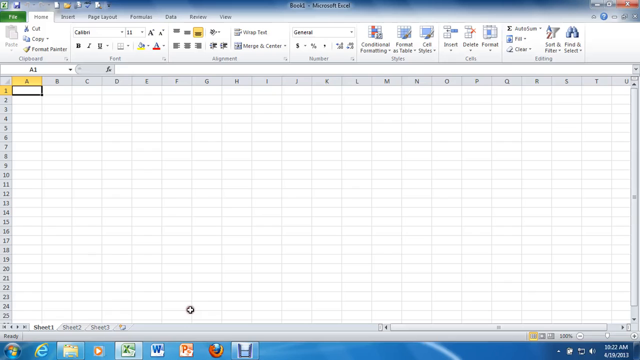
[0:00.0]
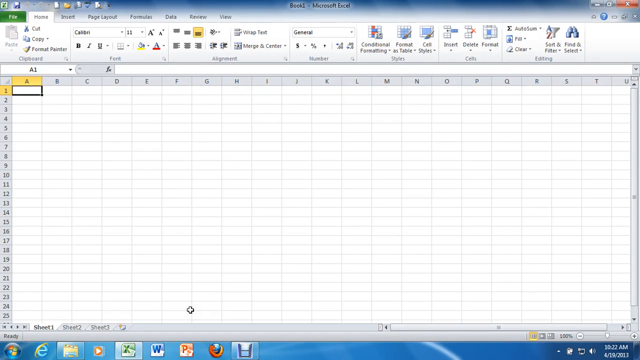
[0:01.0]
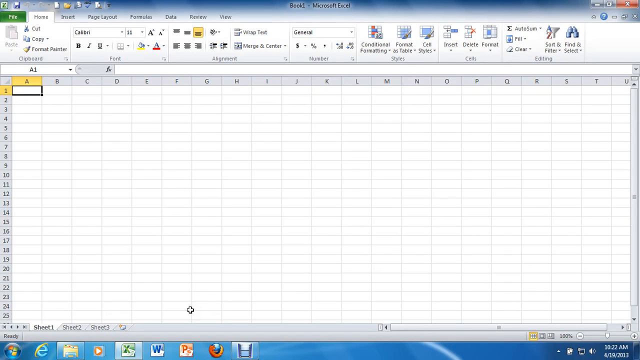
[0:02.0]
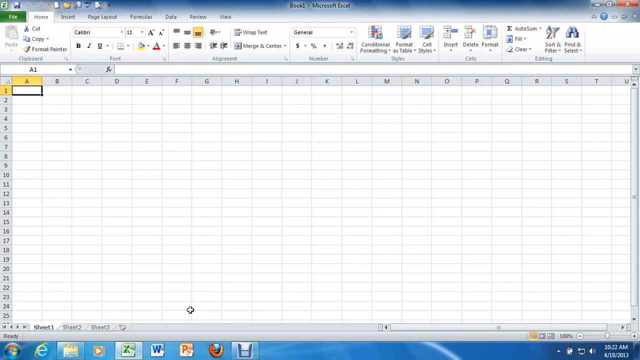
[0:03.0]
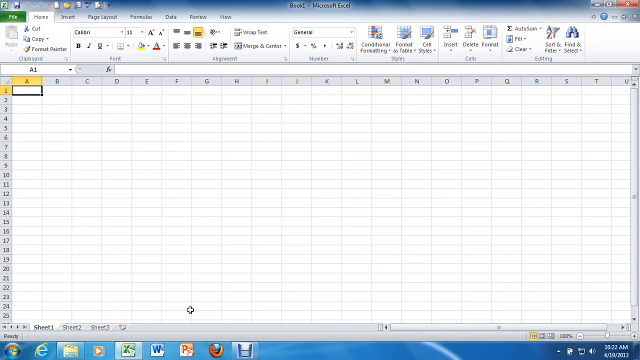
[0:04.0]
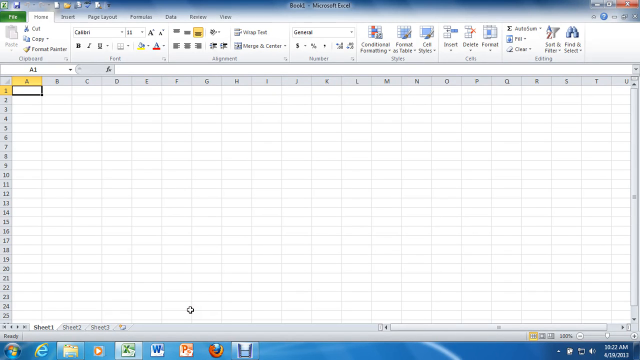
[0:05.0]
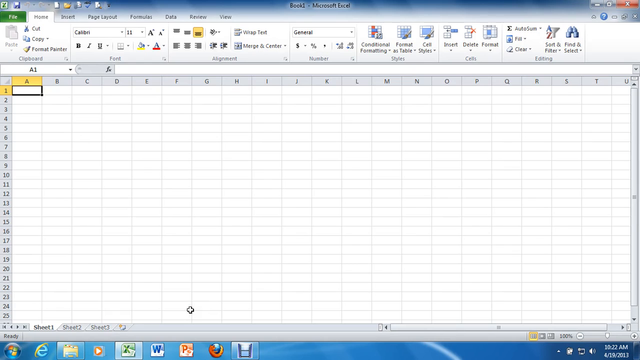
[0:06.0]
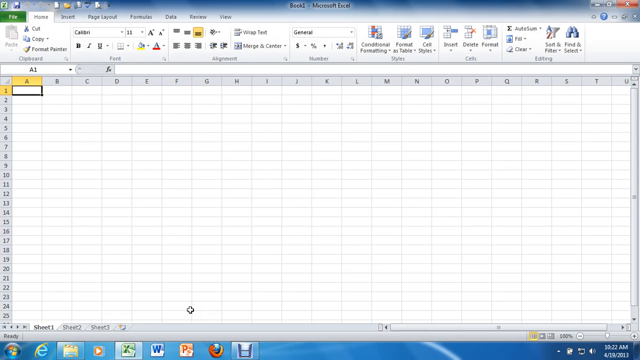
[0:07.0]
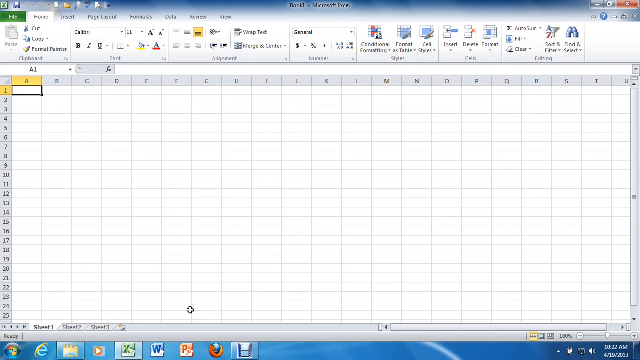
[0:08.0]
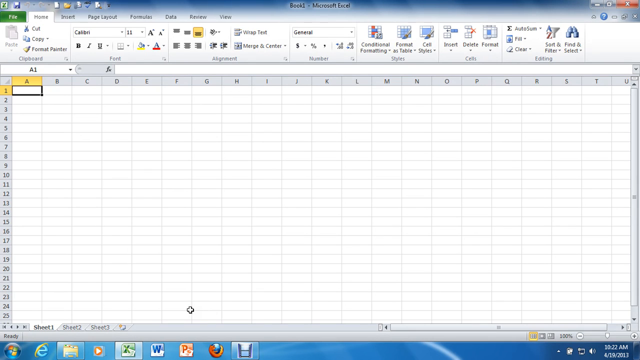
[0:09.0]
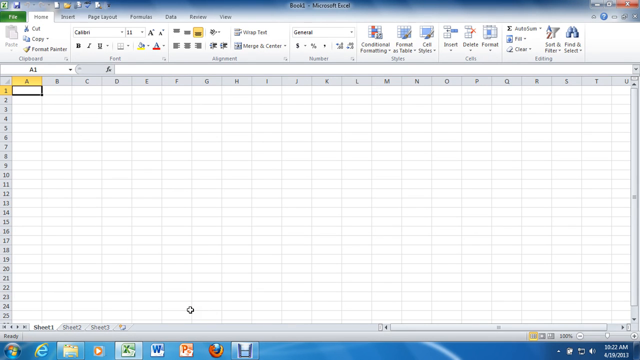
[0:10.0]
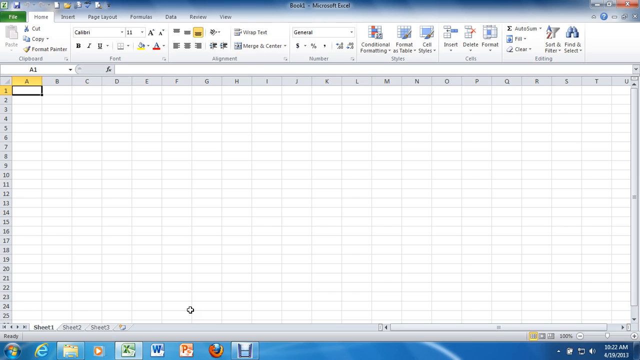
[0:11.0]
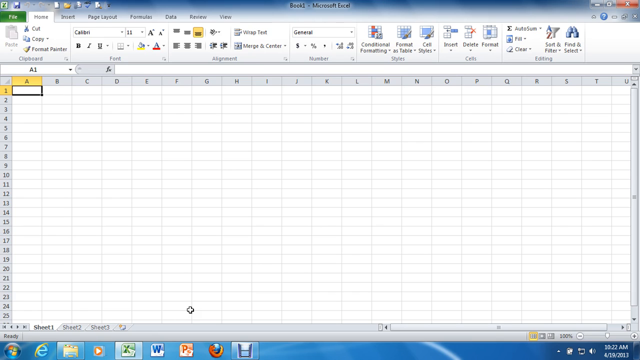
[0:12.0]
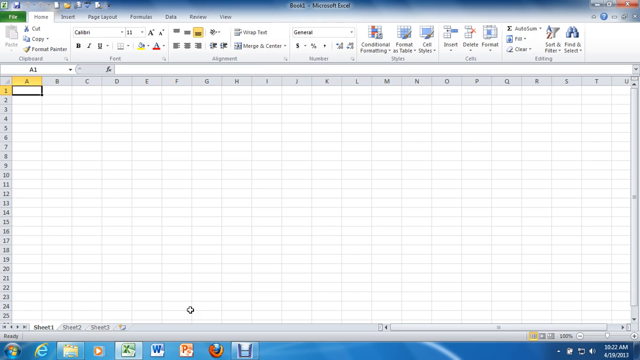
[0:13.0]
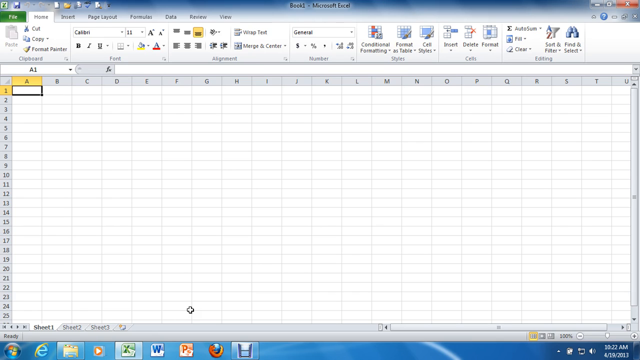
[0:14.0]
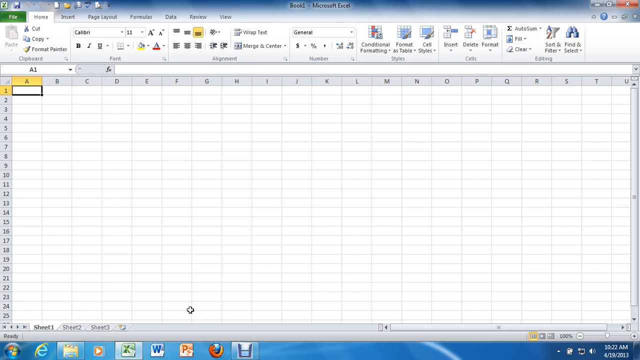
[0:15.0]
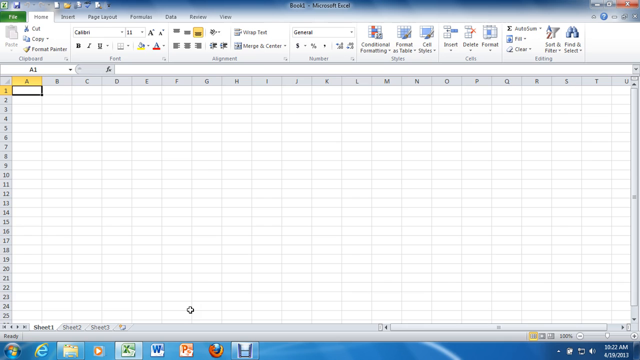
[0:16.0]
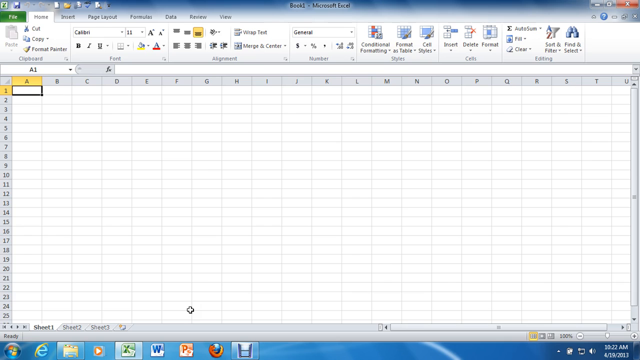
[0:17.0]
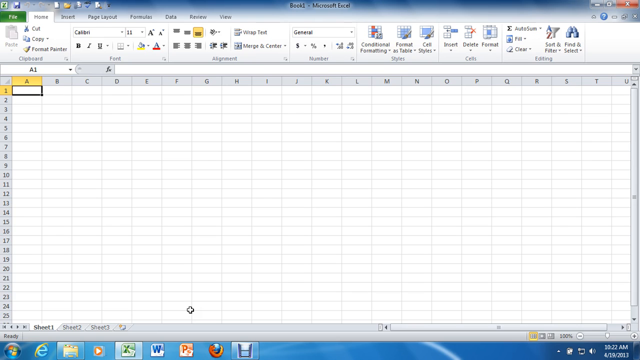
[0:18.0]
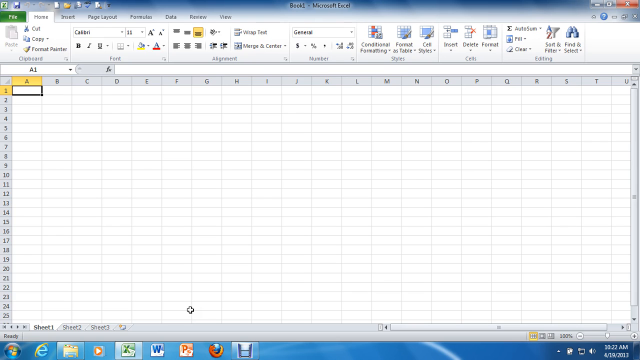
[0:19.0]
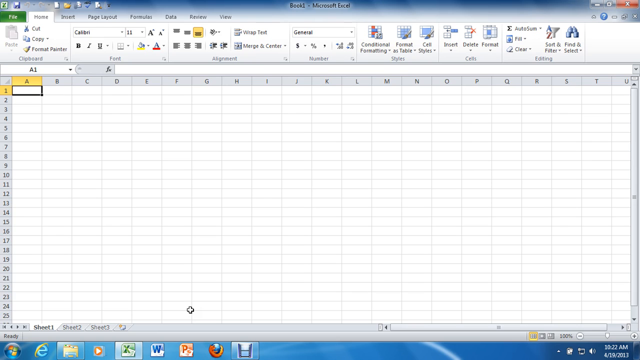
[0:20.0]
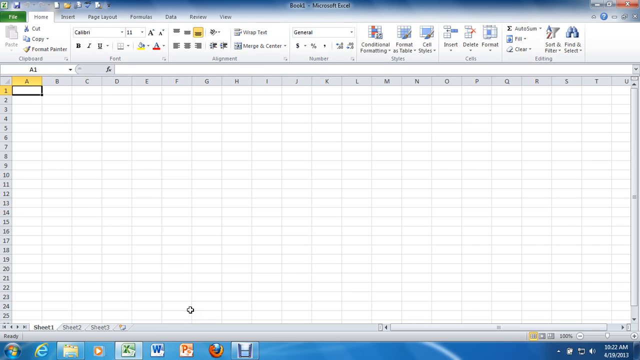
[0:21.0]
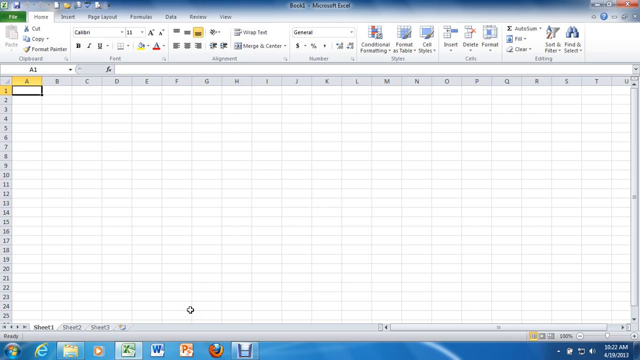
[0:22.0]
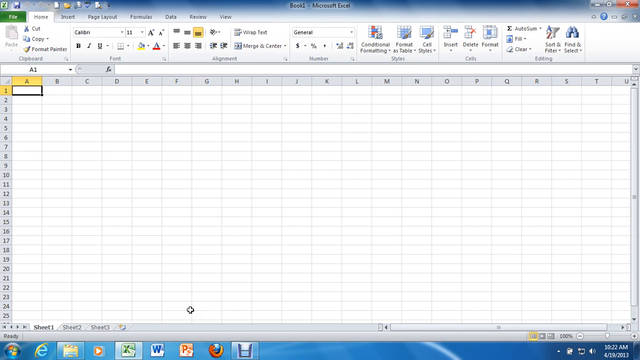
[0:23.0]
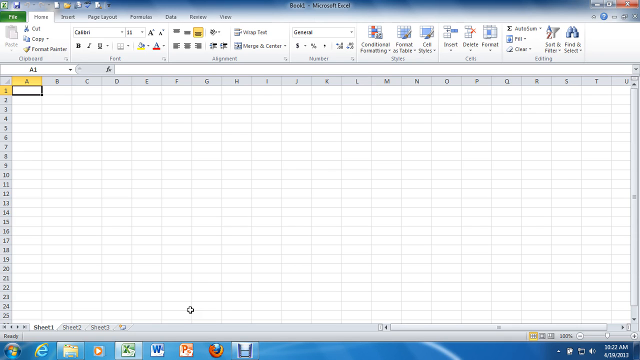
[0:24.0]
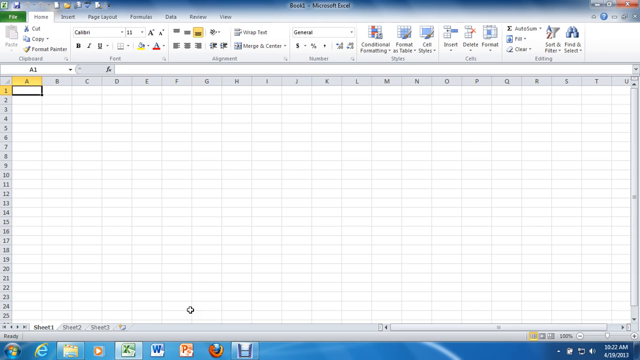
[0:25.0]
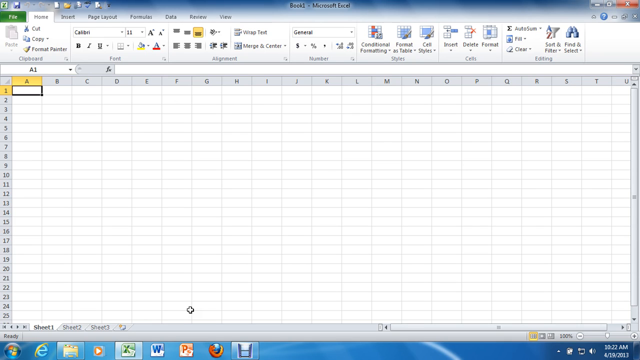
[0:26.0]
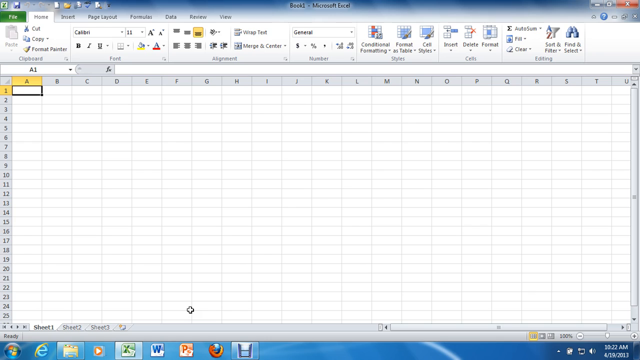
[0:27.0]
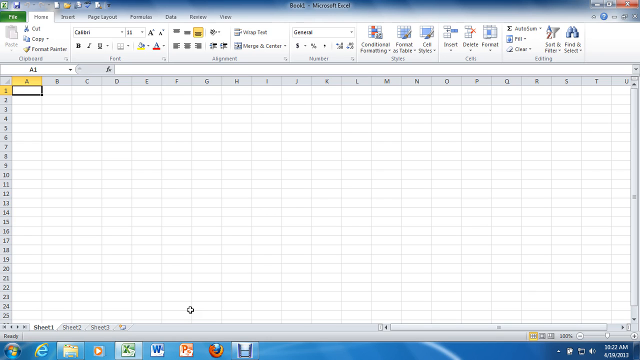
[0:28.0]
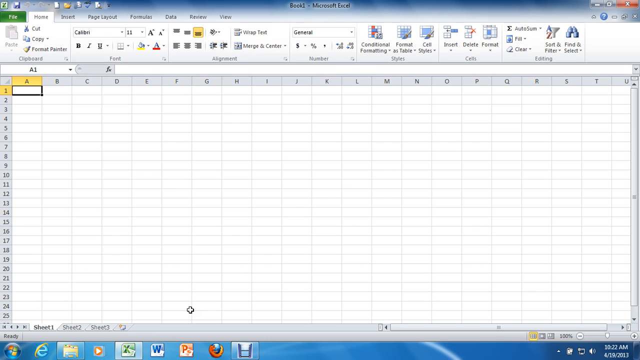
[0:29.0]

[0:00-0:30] A Microsoft Excel page shows what looks like an empty chart, with a bunch of icons all around it. One cell has a gold label, labeled A1, with a black triangle around it, as if something is getting ready to be put in there. The text is too small to read. It is a Microsoft Excel book, number one. Columns are lettered A through V, and rows are numbered from 1 upward, with 25 slots in each section, but none of the cells contain anything. Nothing happens on the page; it stays still with nothing being done on it. There are also controls to mute the sound and to make the page full screen.